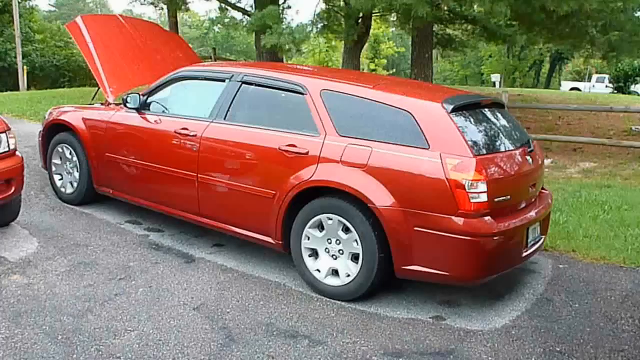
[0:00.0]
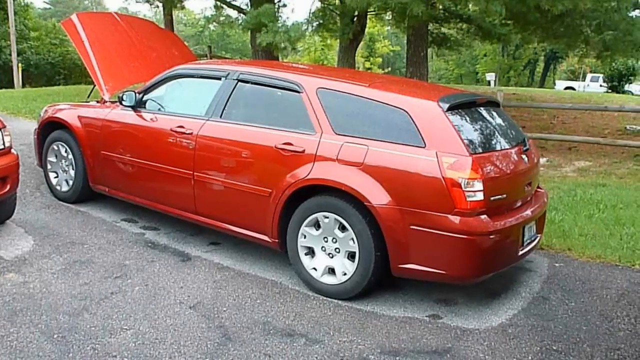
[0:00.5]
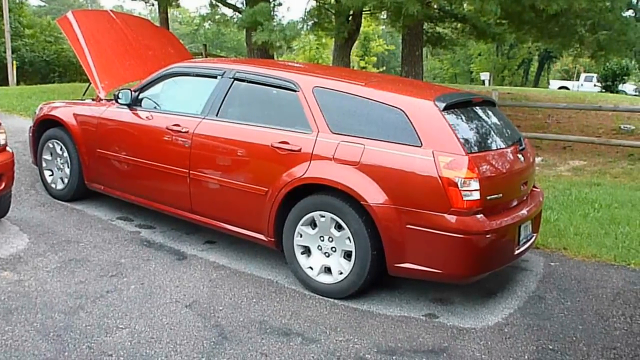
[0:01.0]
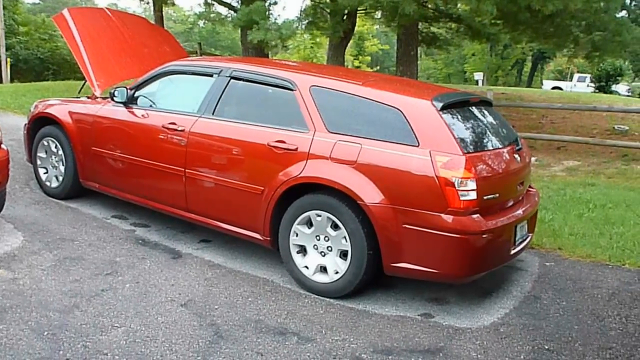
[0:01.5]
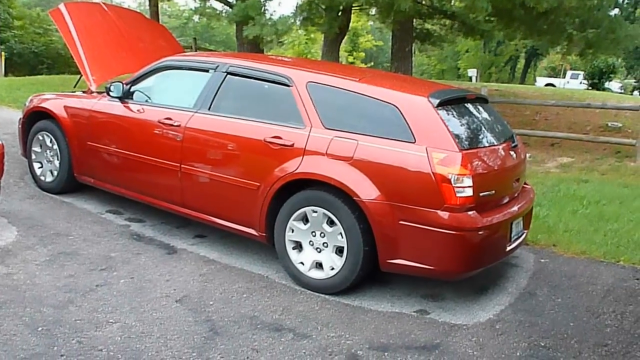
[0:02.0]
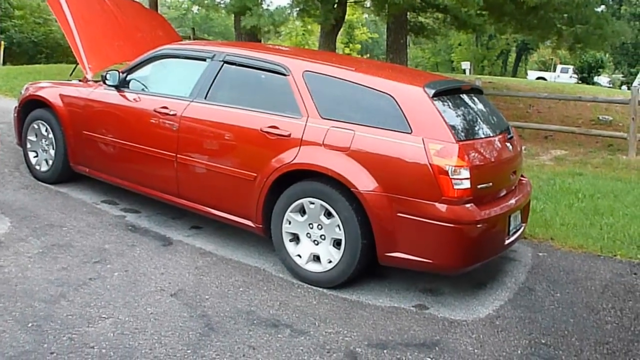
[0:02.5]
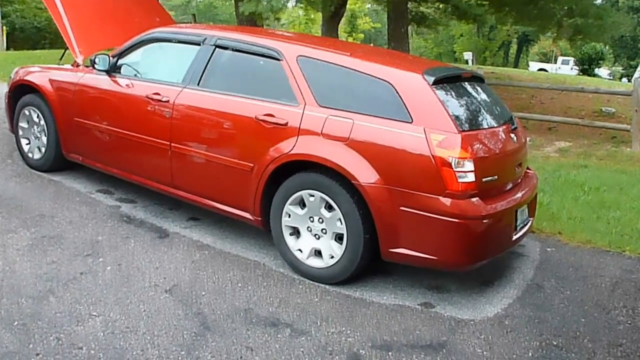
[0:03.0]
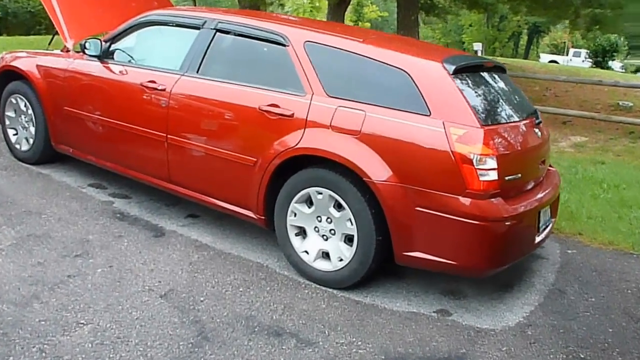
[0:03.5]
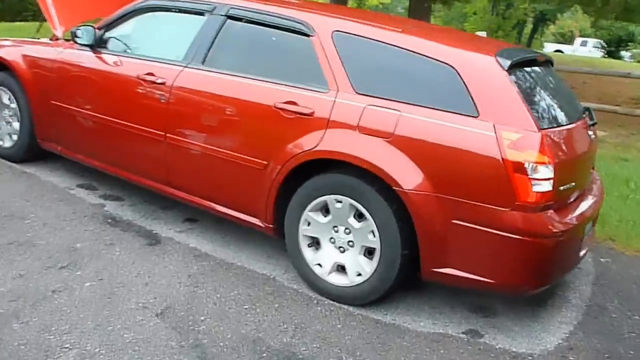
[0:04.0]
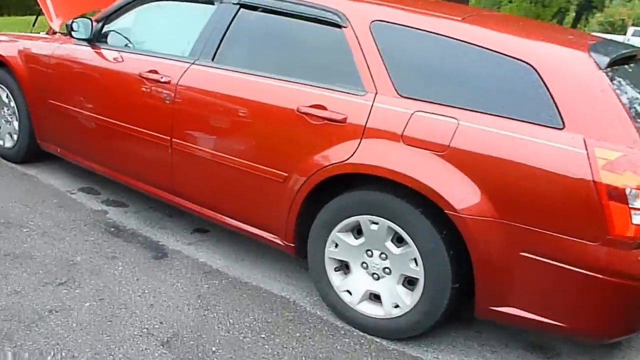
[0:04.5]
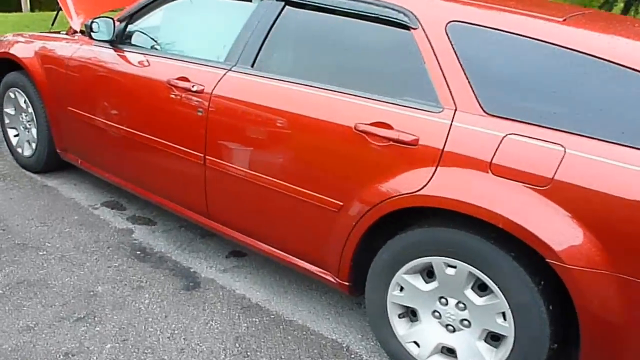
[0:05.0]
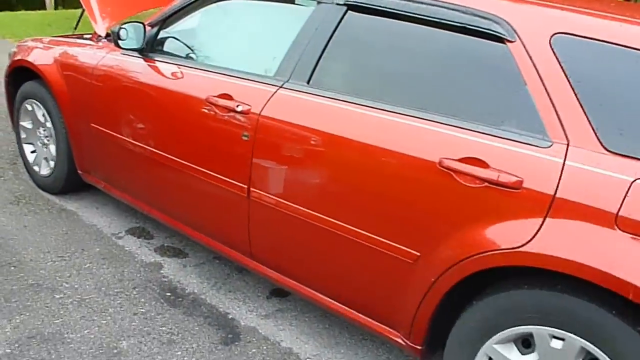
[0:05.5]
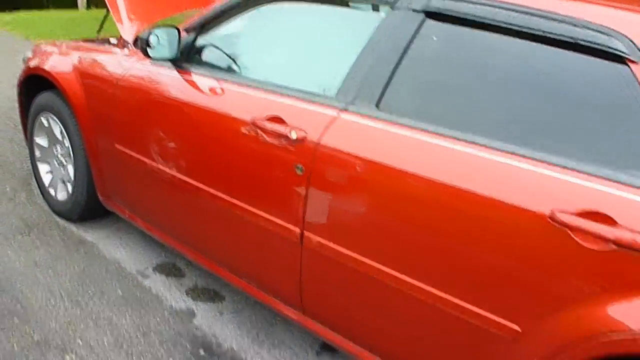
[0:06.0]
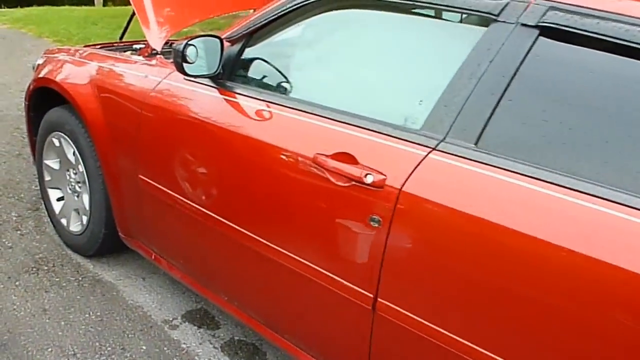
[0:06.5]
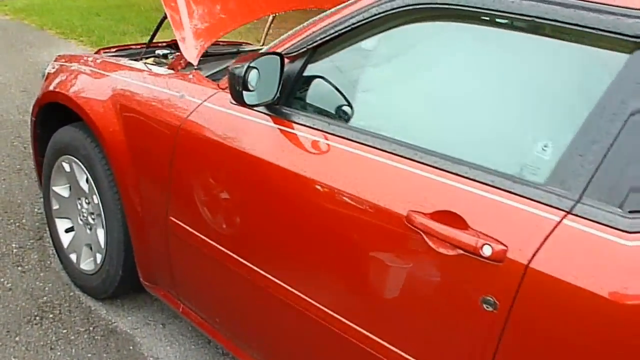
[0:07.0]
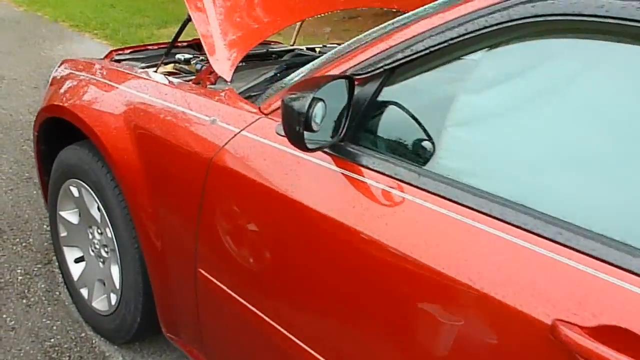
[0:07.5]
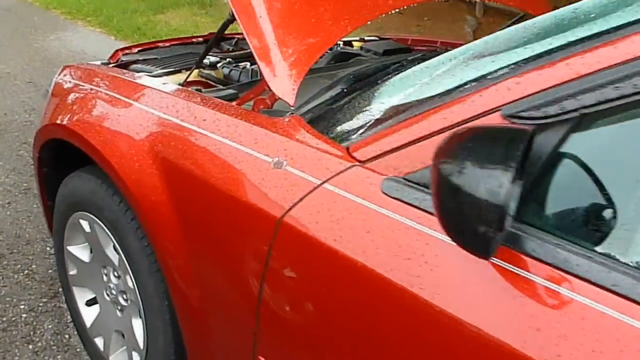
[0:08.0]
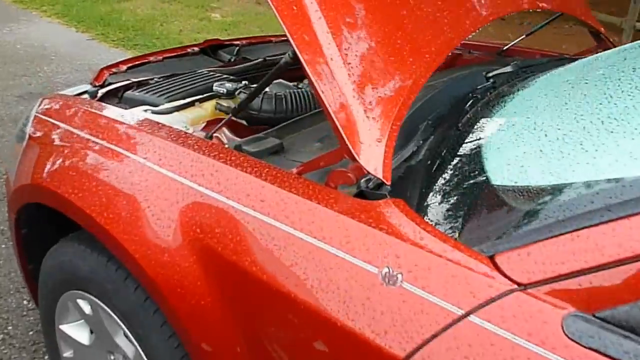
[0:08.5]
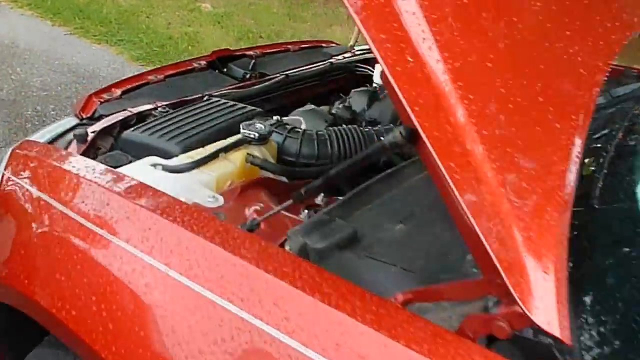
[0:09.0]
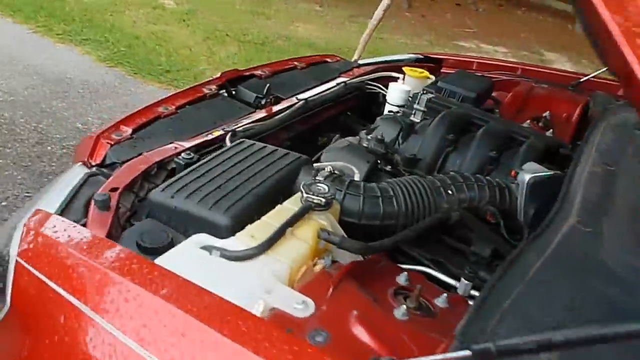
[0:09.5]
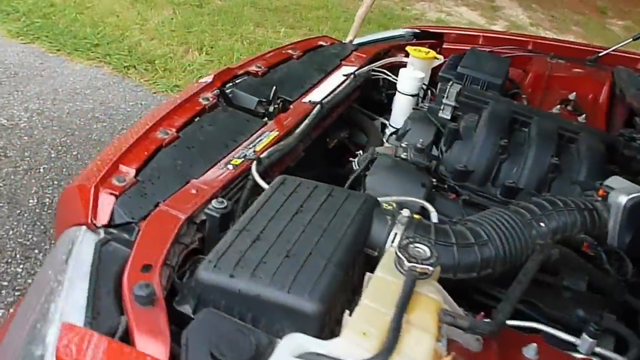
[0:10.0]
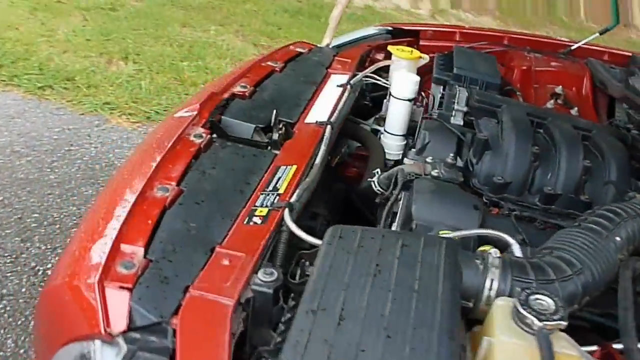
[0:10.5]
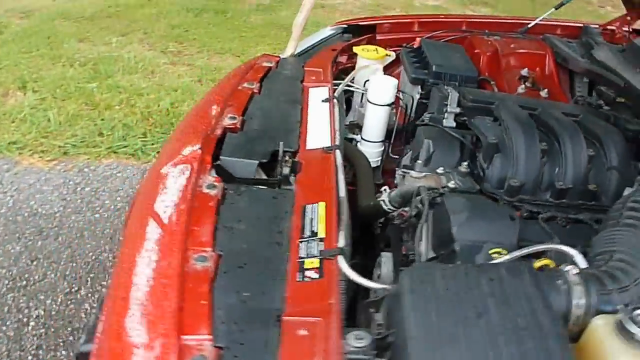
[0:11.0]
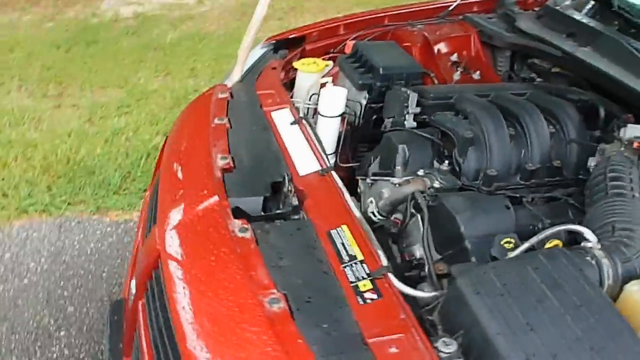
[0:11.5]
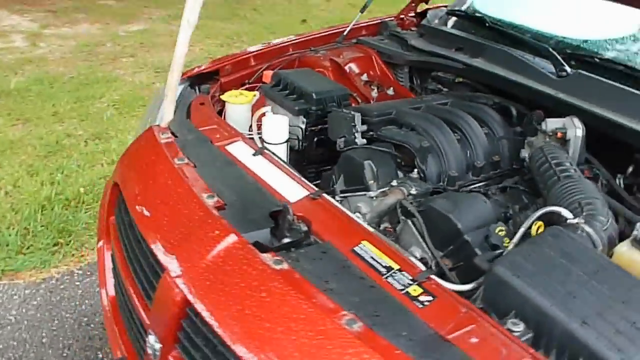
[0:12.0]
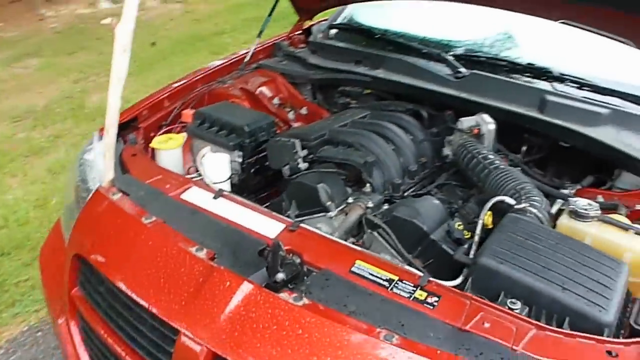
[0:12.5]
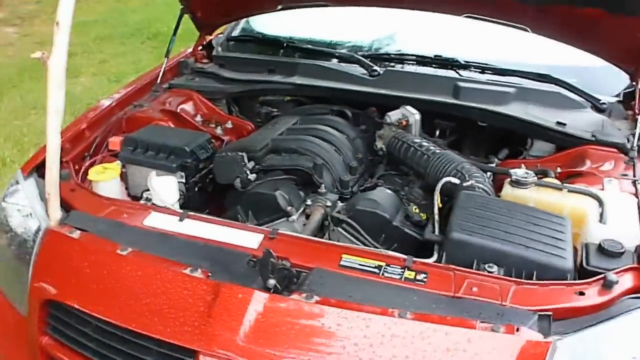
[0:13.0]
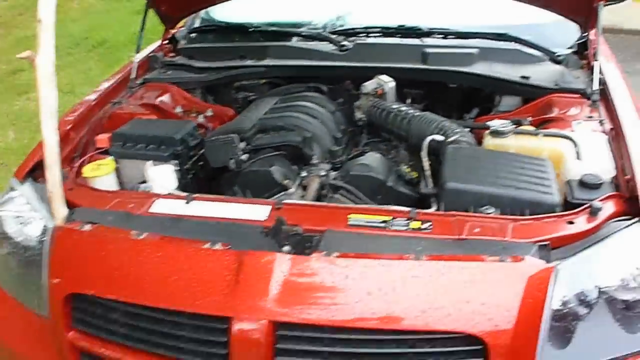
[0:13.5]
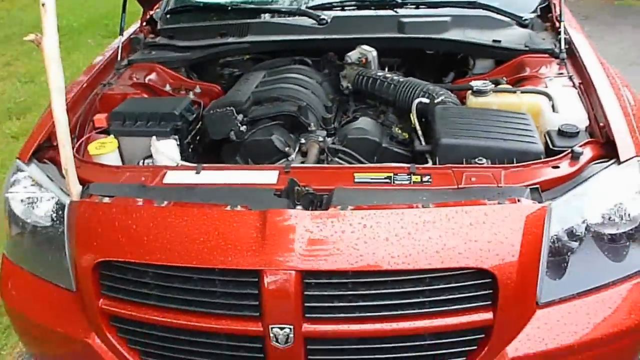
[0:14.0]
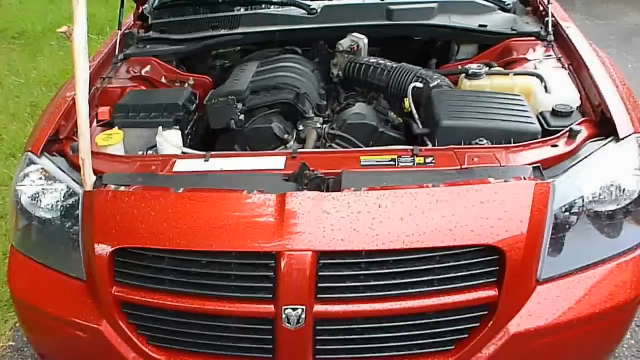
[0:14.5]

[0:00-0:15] A 2005 Dodge Magnum, apparently with an HHO generator installed, is seen from the side. The car is a sort of candy apple red, and beads of water cover it, as if it has been raining or it was just washed. It has a hatchback, four doors and a low body, and it almost looks like a modern version of the classic station wagon. The hood is open and the engine looks clean; the car is in quite good shape. The footage, apparently filmed on a smartphone, suffers from rolling shutter: the picture is clear but everything is jiggly, and the car's body warps heavily as the camera moves towards it and rotates around it. Wet pavement is behind or beneath the car.